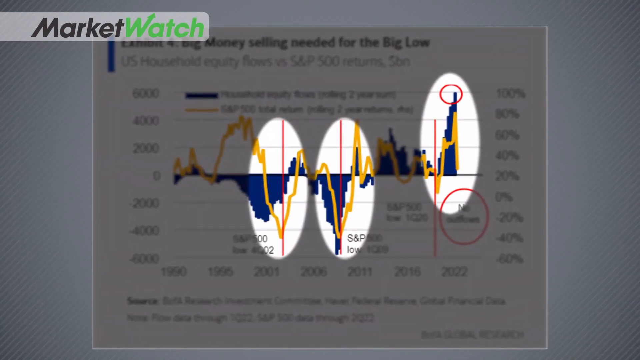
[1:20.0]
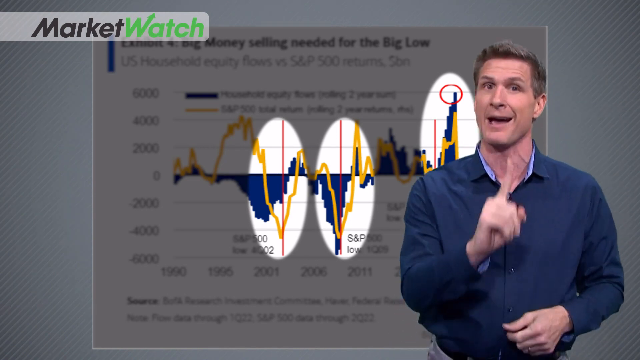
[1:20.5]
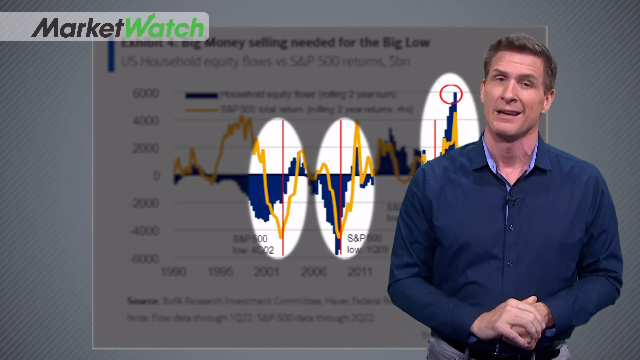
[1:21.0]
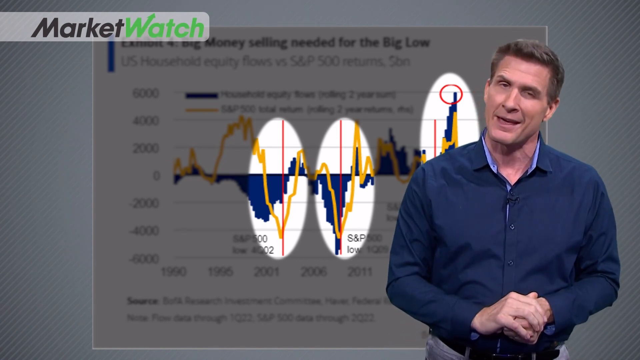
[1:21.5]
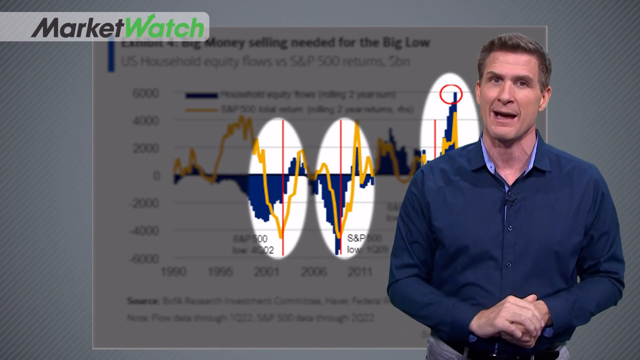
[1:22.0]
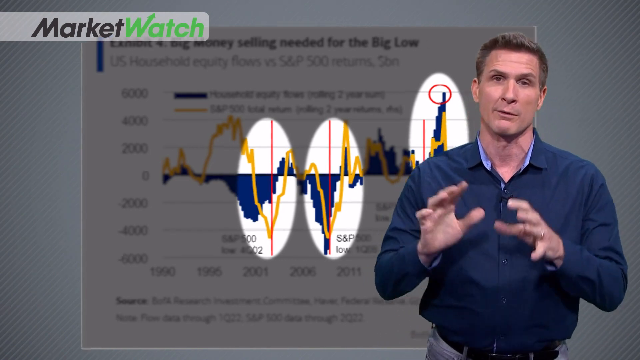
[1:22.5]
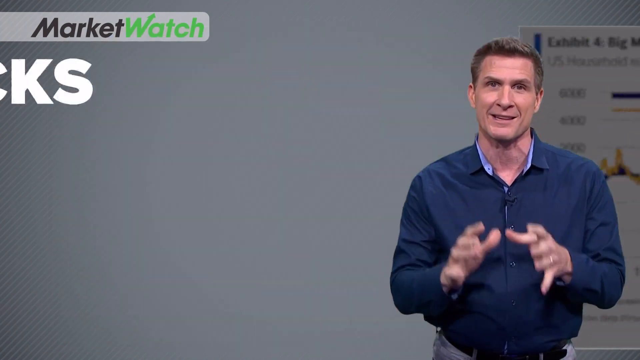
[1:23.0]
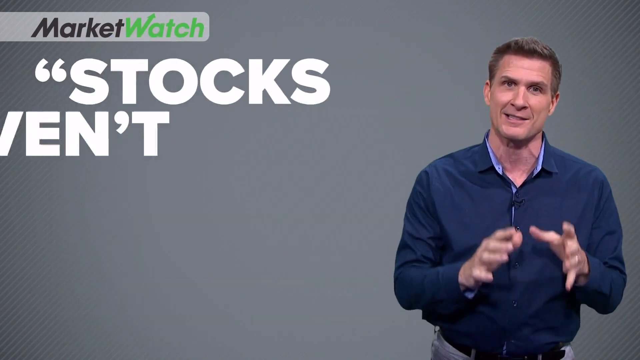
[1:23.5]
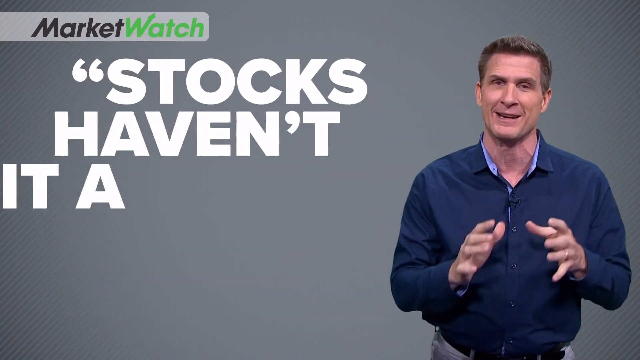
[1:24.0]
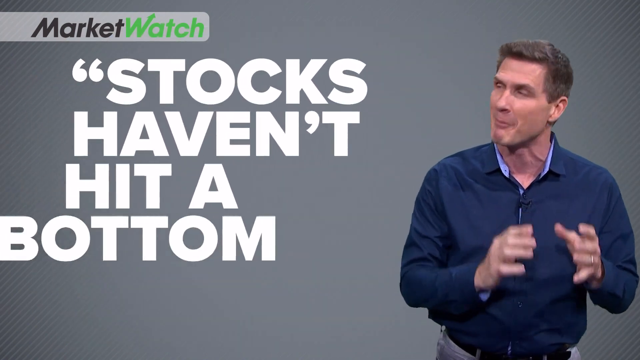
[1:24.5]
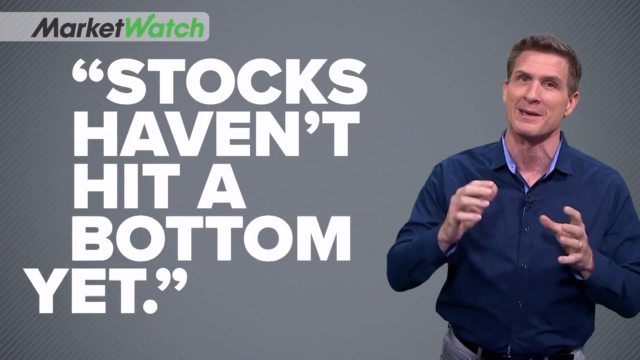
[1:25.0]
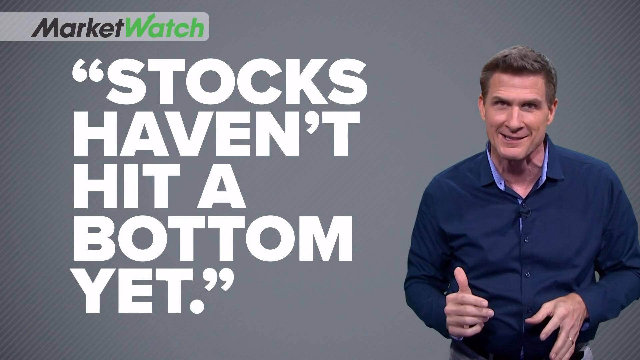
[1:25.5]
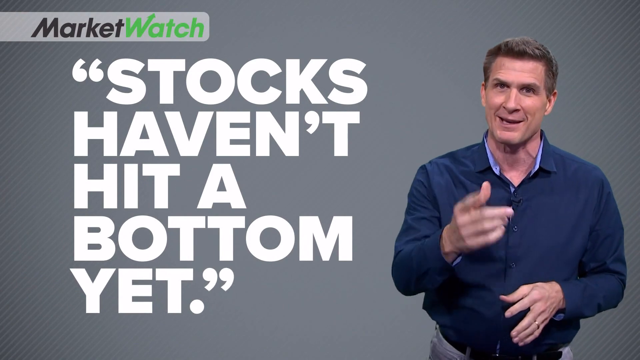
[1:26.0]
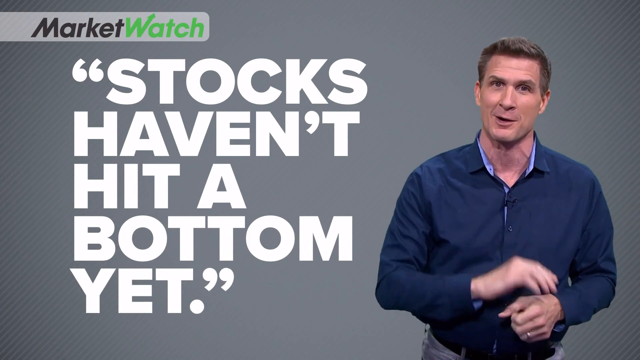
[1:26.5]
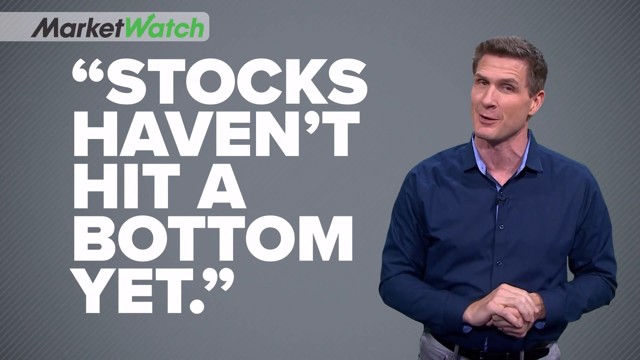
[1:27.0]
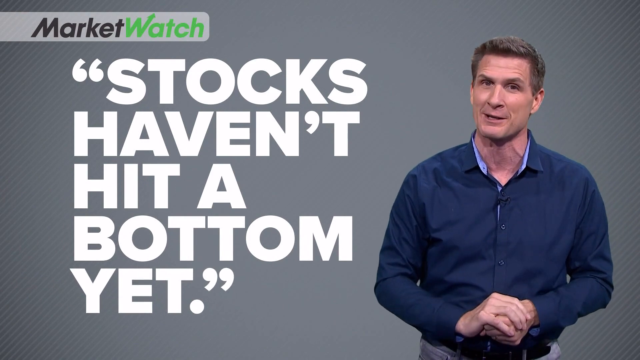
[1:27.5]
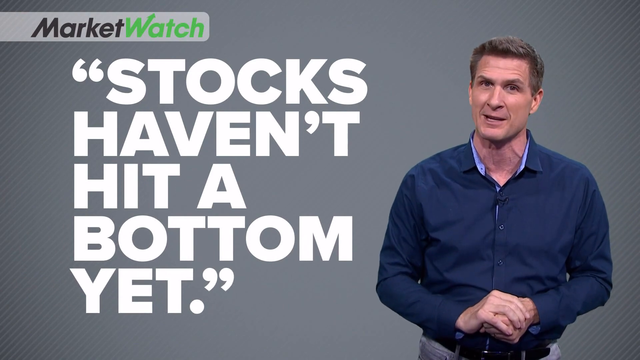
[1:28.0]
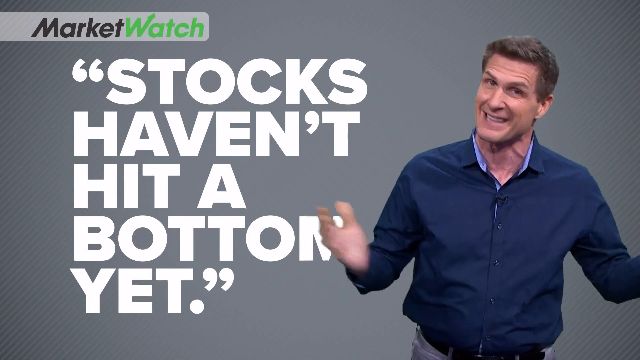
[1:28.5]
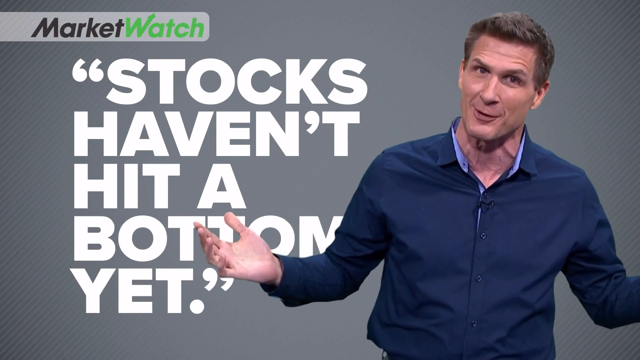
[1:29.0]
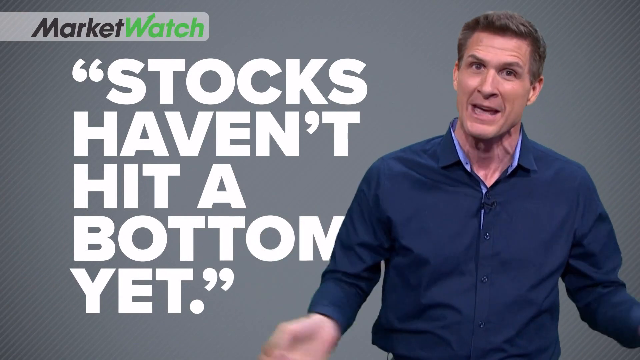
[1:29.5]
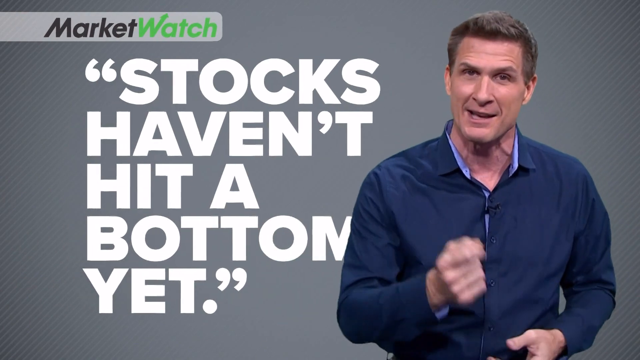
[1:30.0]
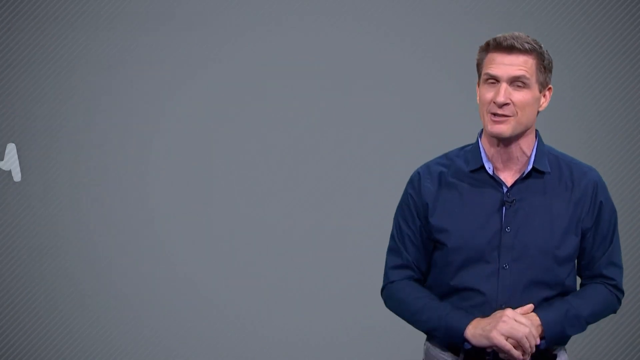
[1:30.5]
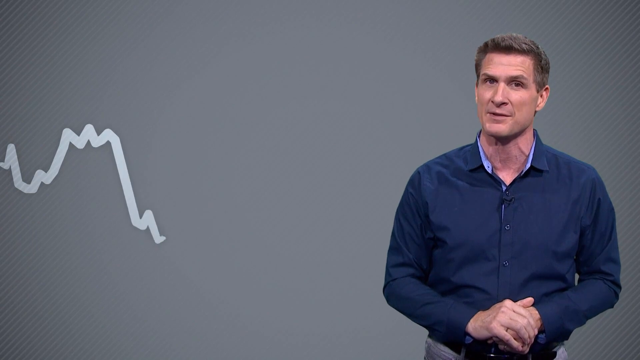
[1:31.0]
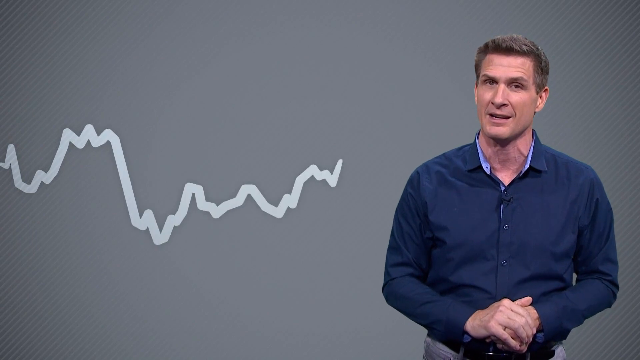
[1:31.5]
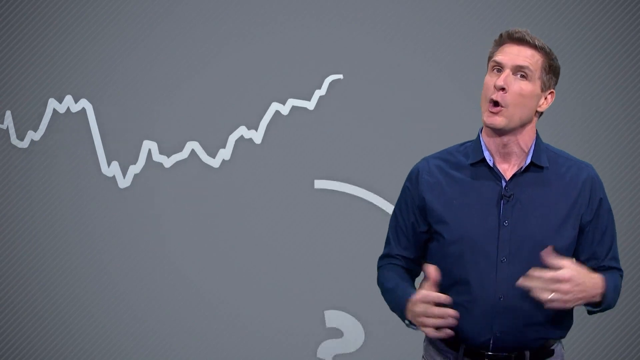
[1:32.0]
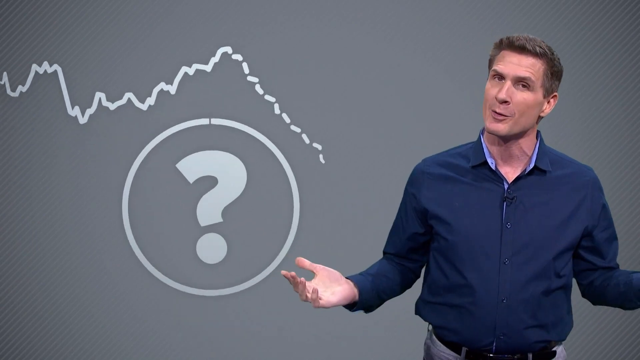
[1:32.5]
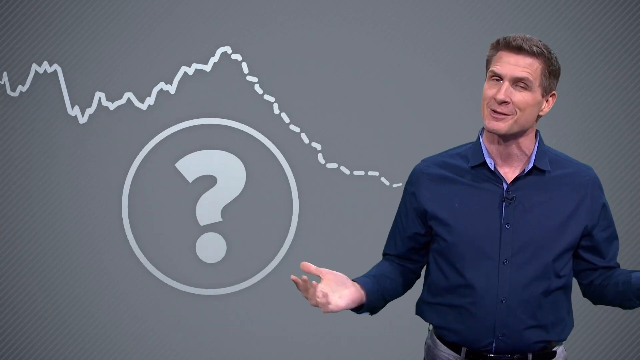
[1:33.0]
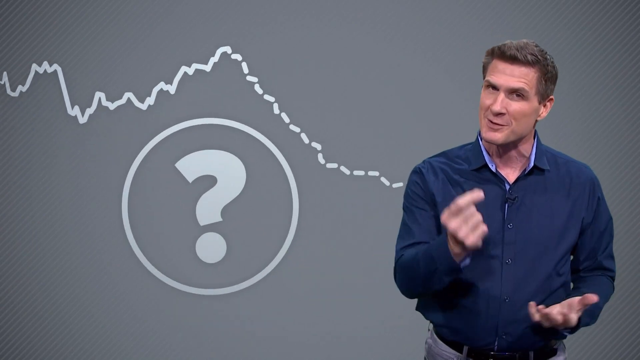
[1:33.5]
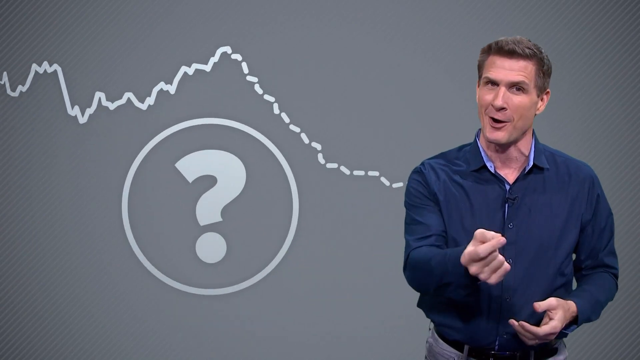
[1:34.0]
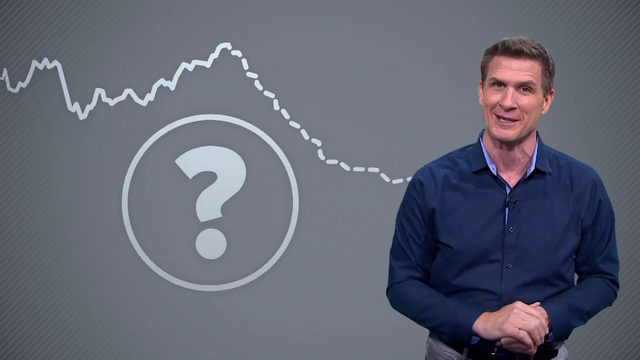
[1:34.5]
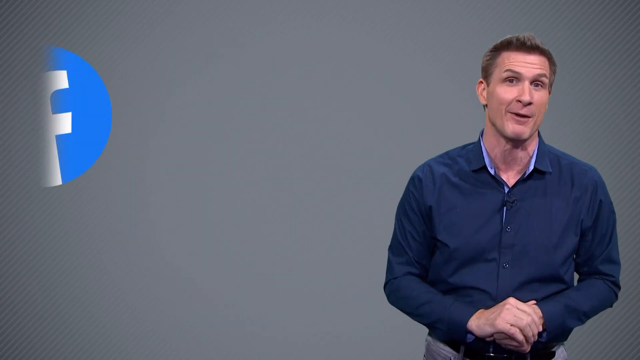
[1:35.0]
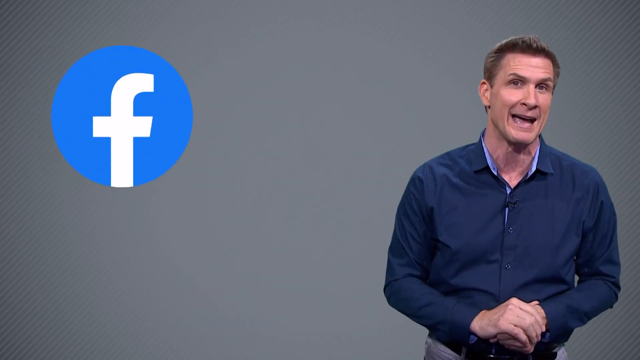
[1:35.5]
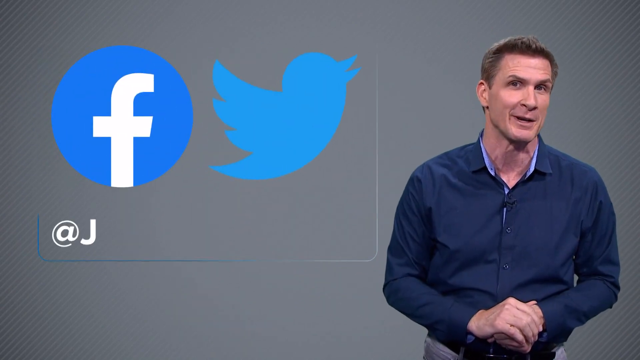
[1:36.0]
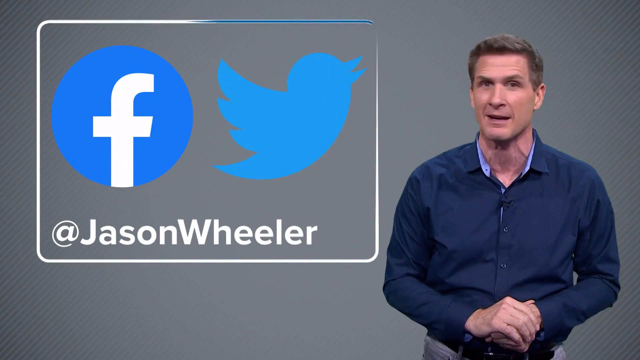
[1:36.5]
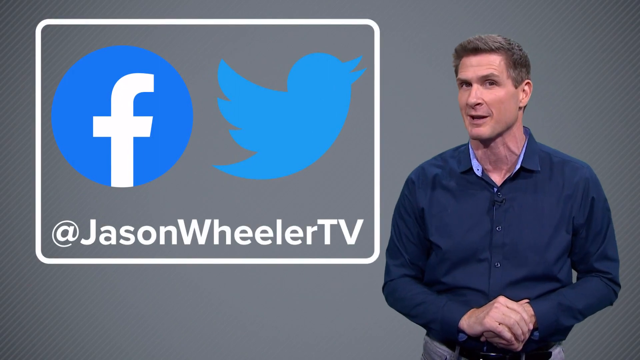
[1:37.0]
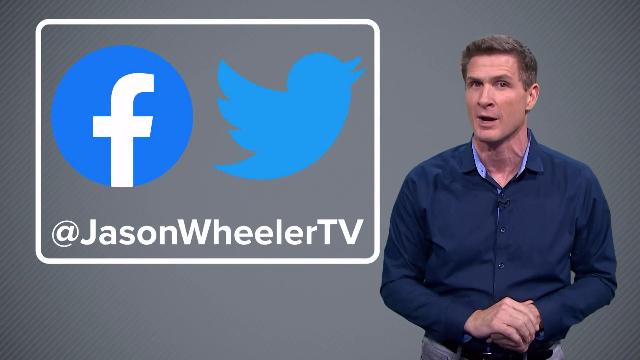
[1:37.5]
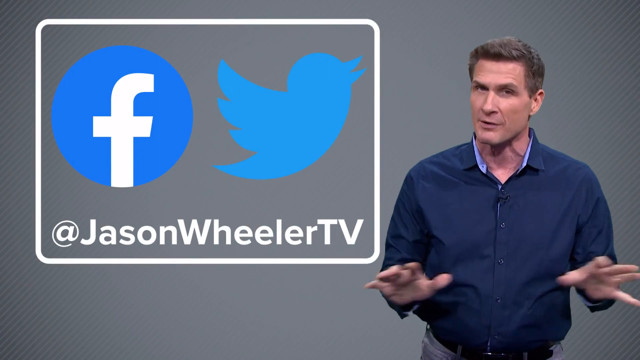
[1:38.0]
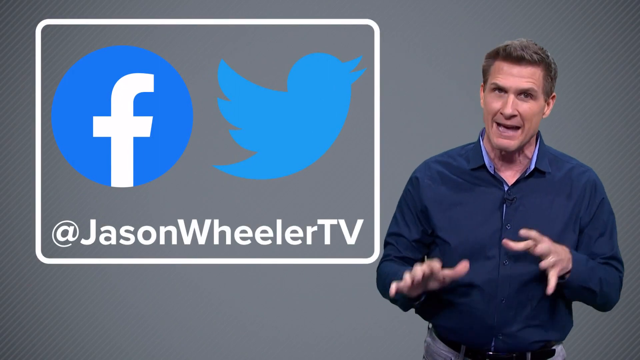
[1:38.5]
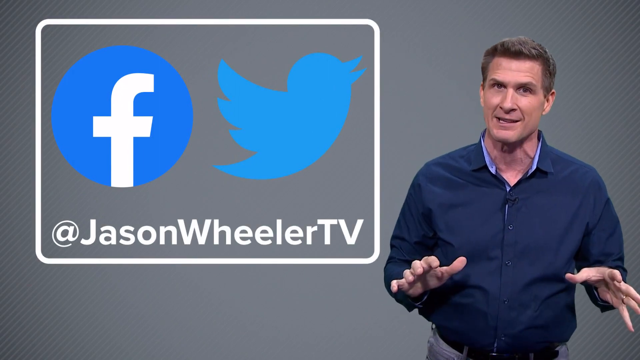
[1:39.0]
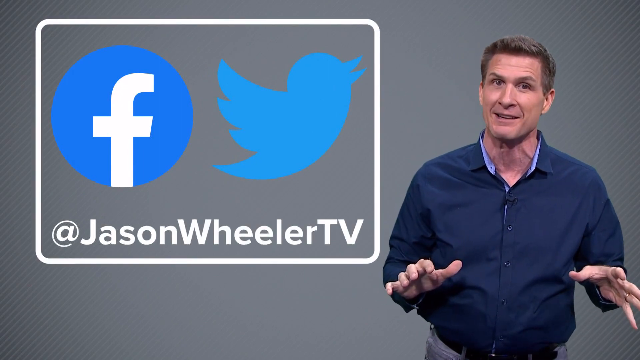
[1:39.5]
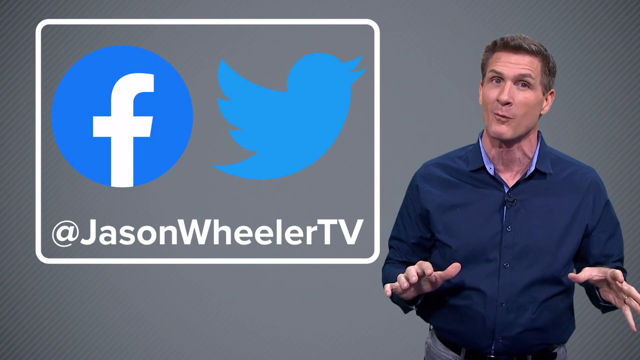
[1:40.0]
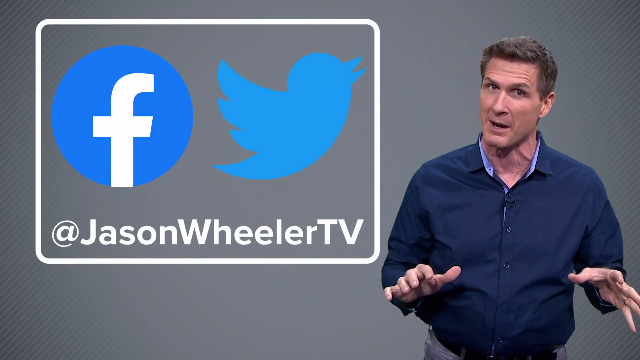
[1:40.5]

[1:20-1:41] The man in the blue jacket is standing in front of a graphic with a chart on it. In the top left corner, in black and green, is the text "market watch". A large graphic in thick font reads "stocks haven't hit a bottom yet", written in white on the gray wall and shown in quotes. The man keeps talking, very expressive with big arm movements. Another graphic appears behind him: a line chart with peaks and valleys over a large question mark in a circle. Then a square pops up with the Facebook and Twitter logos, and underneath it says "at Jason Wheeler TV", apparently promoting the presenter's social media.